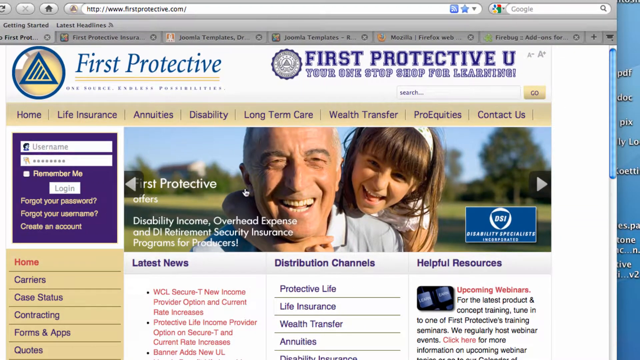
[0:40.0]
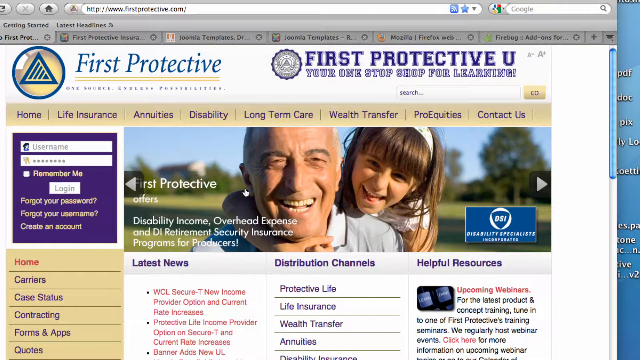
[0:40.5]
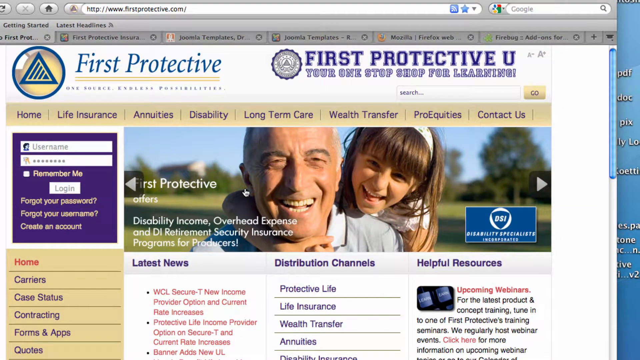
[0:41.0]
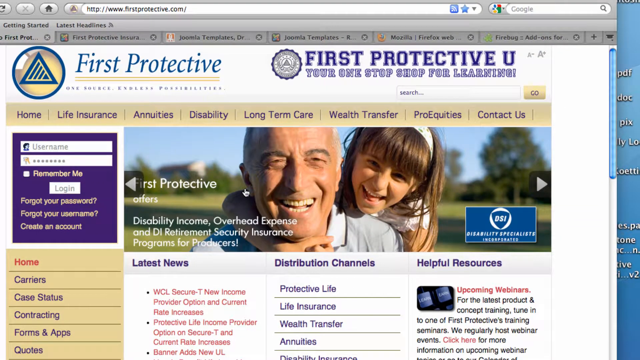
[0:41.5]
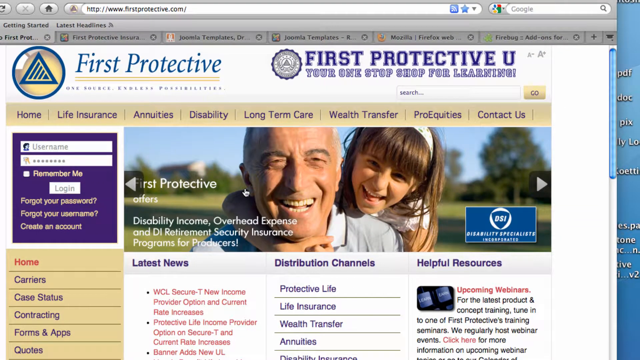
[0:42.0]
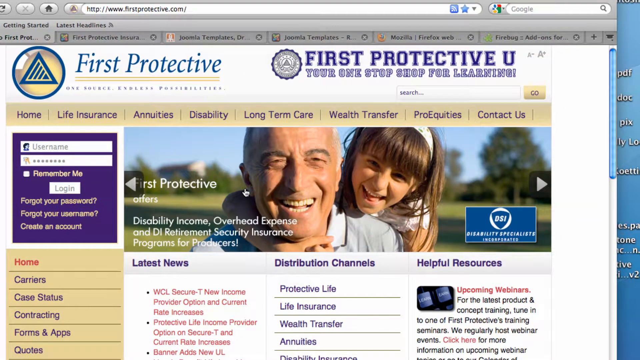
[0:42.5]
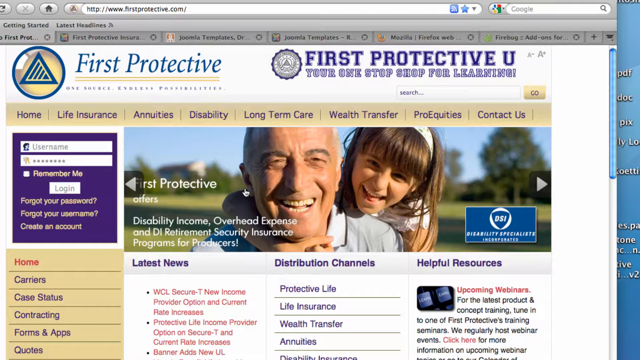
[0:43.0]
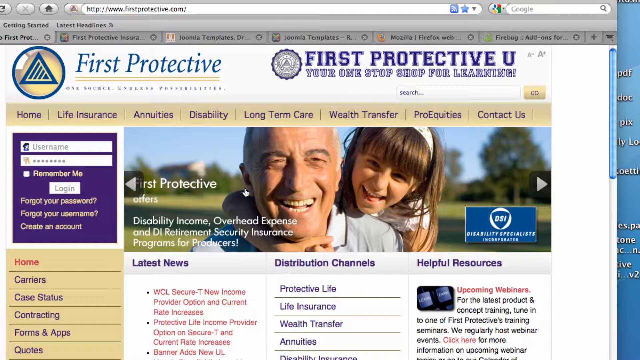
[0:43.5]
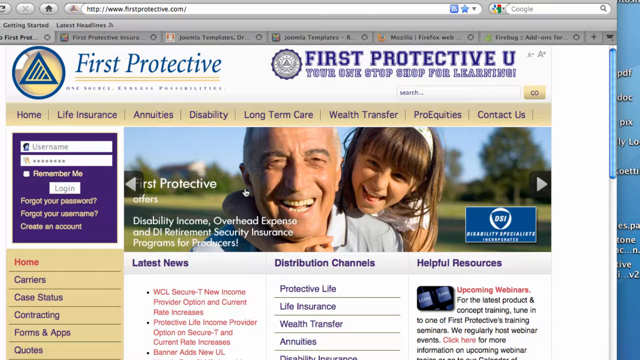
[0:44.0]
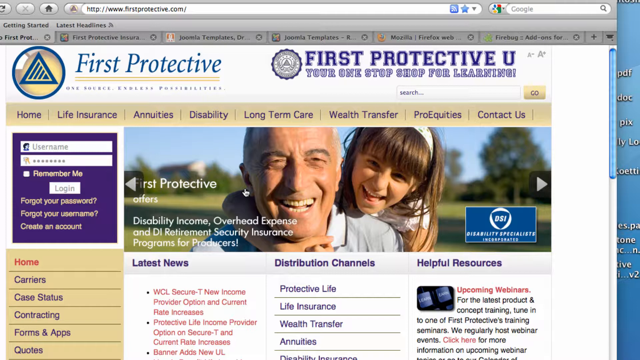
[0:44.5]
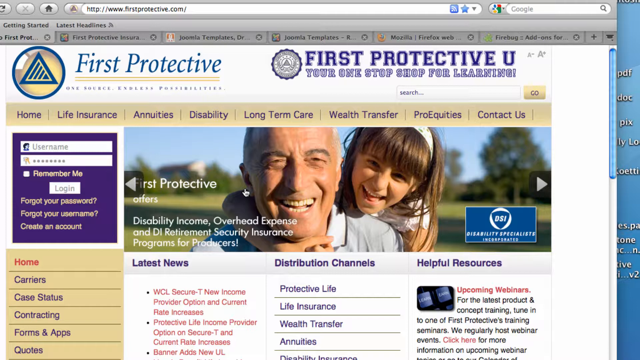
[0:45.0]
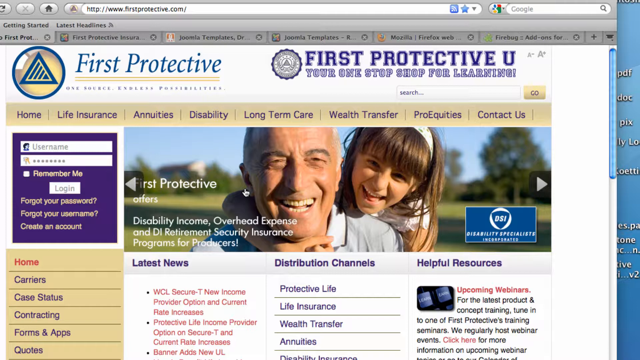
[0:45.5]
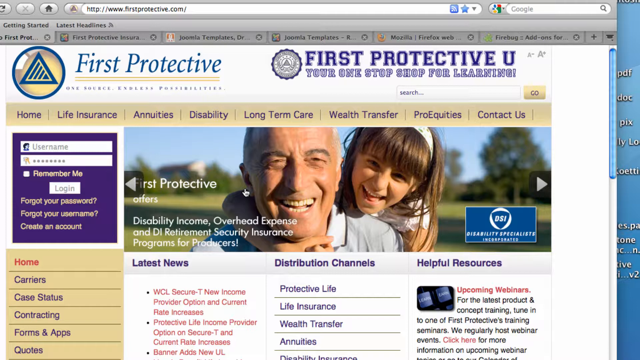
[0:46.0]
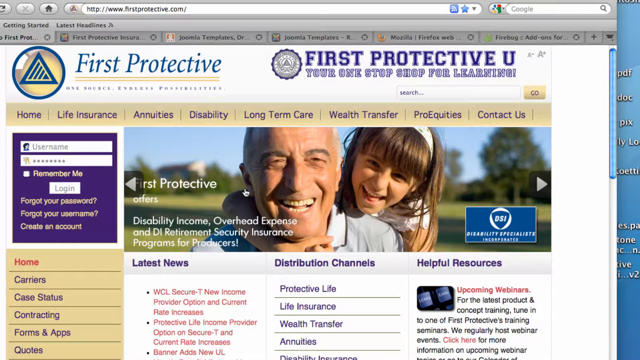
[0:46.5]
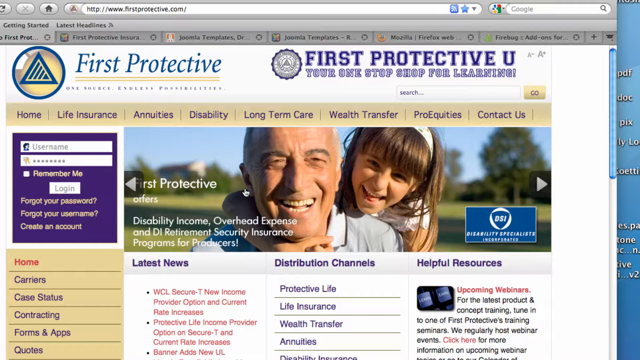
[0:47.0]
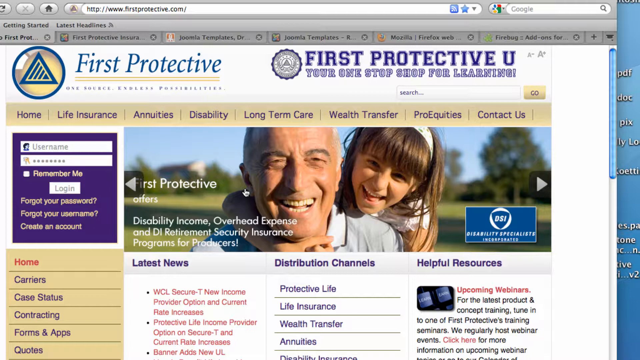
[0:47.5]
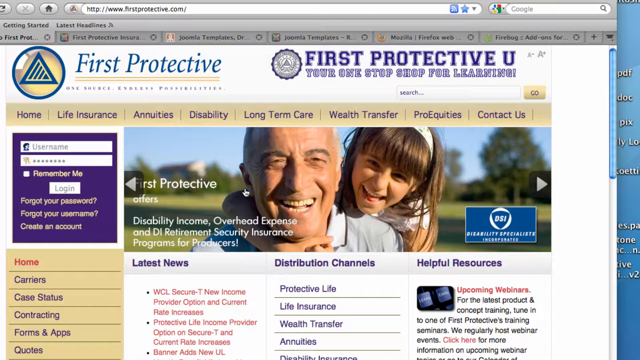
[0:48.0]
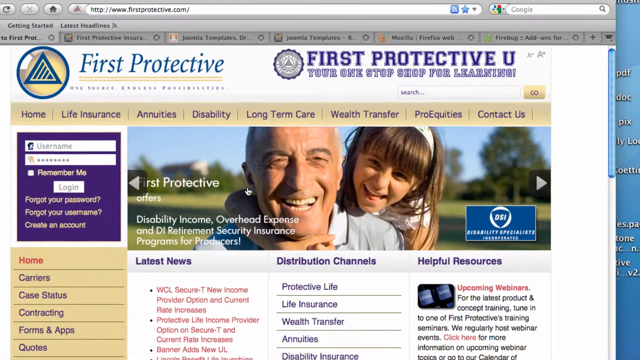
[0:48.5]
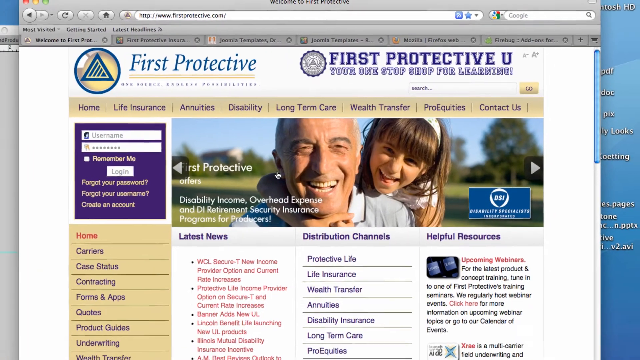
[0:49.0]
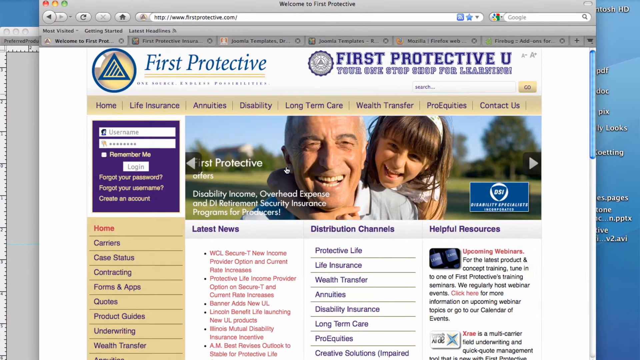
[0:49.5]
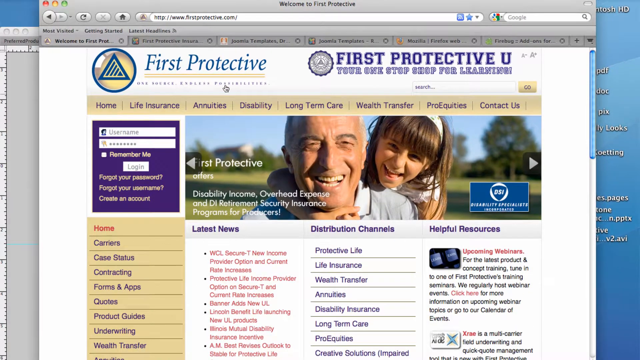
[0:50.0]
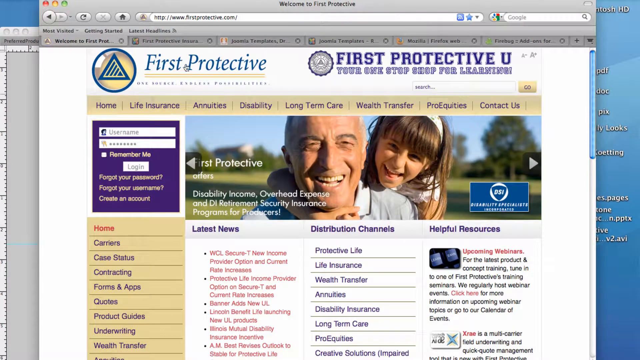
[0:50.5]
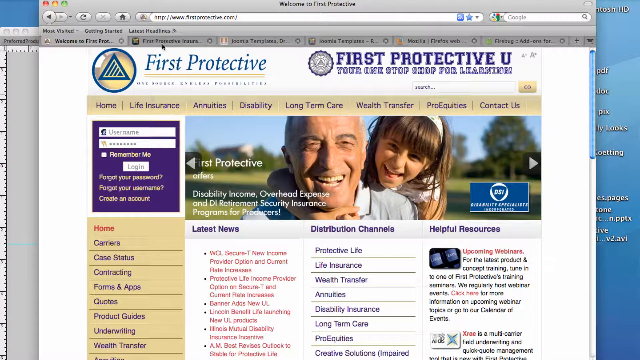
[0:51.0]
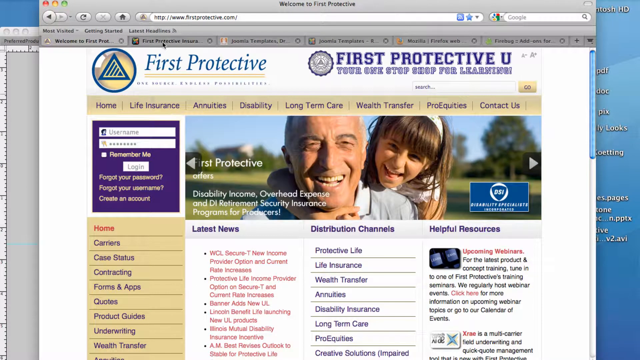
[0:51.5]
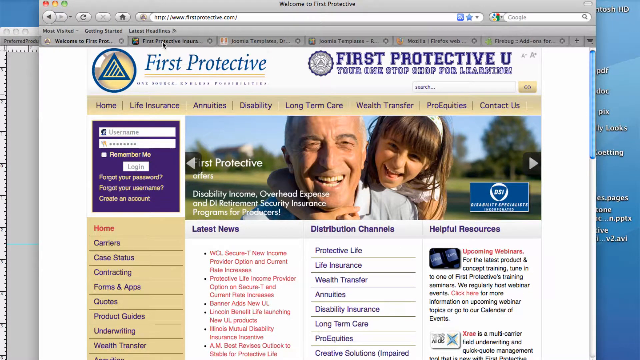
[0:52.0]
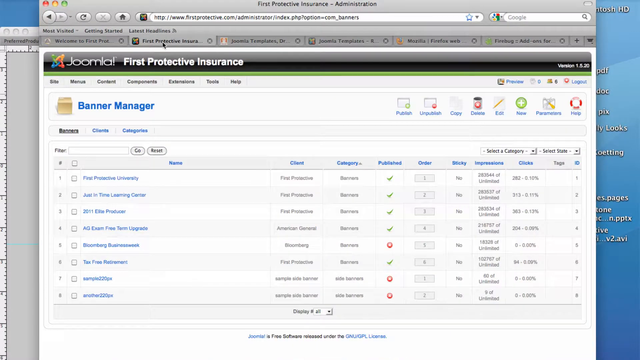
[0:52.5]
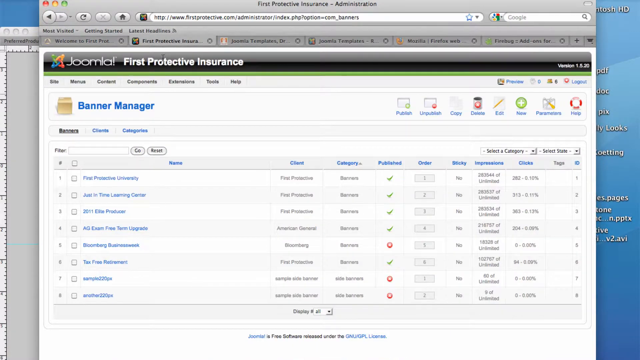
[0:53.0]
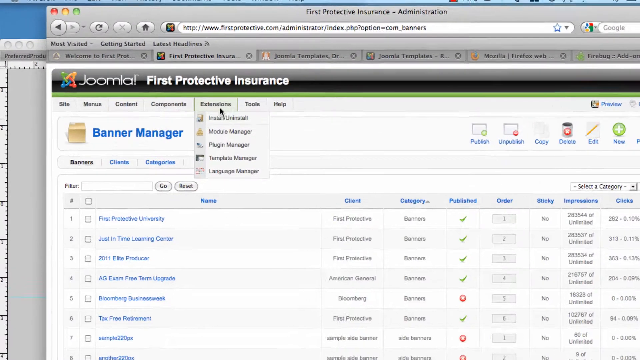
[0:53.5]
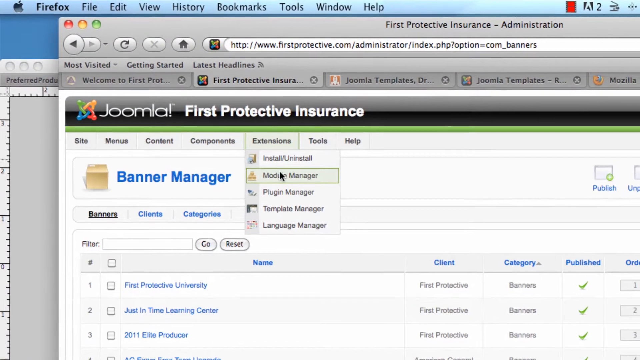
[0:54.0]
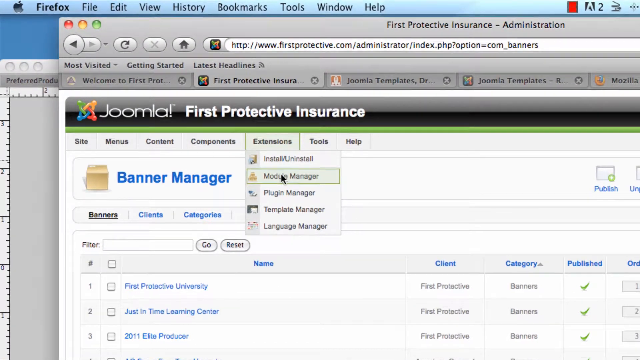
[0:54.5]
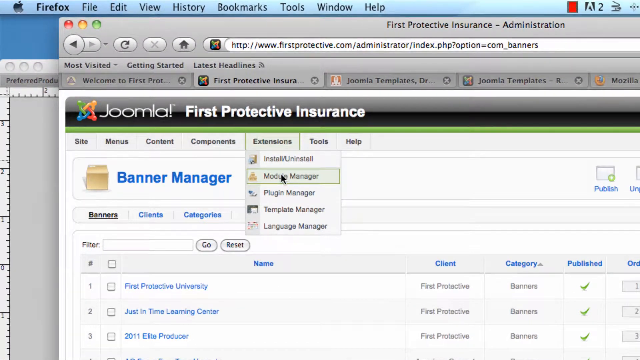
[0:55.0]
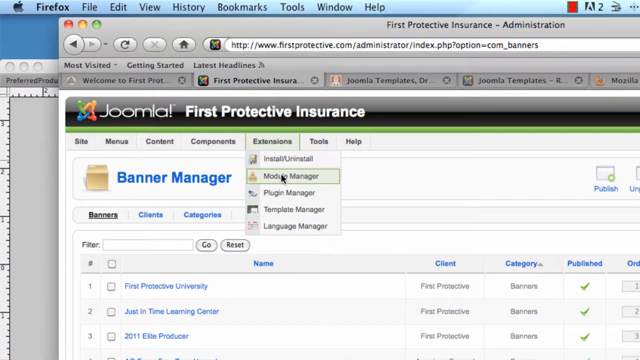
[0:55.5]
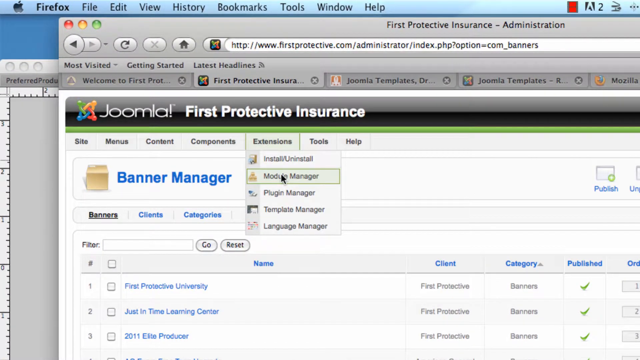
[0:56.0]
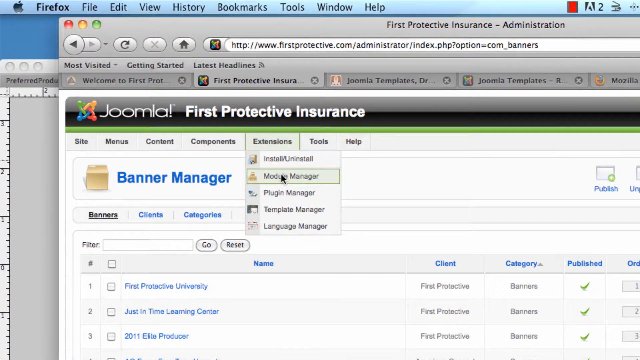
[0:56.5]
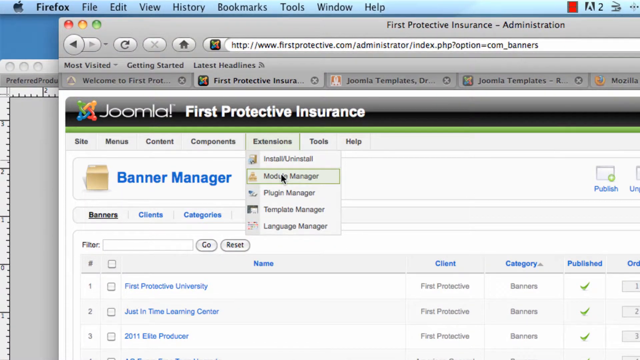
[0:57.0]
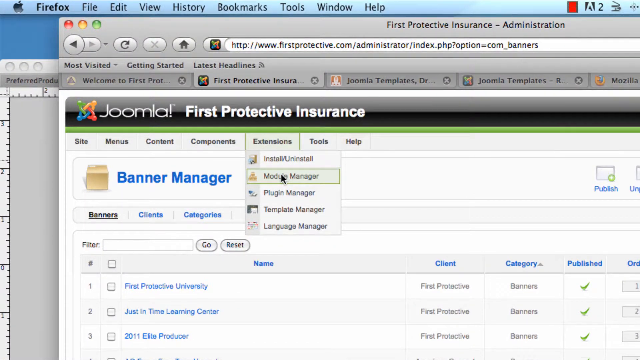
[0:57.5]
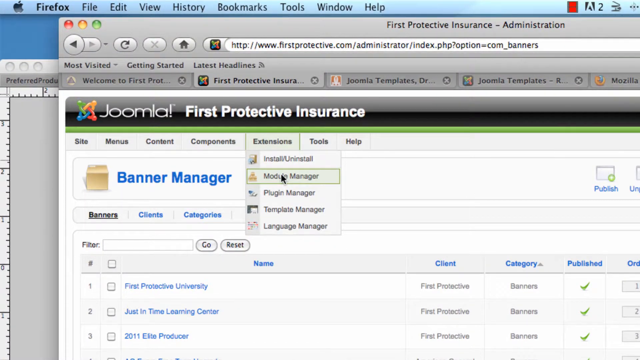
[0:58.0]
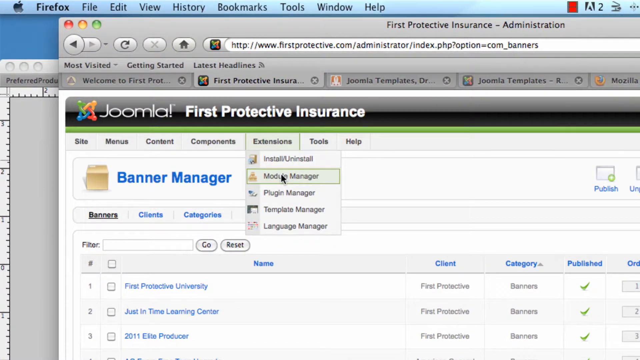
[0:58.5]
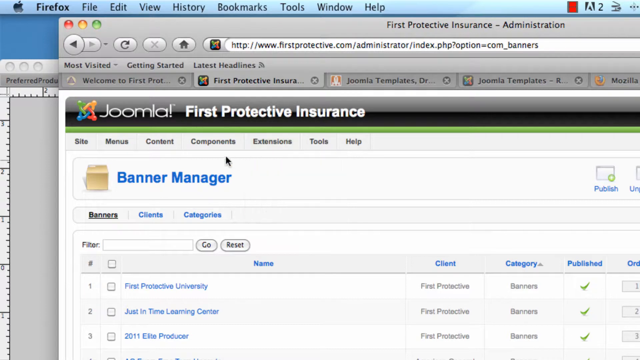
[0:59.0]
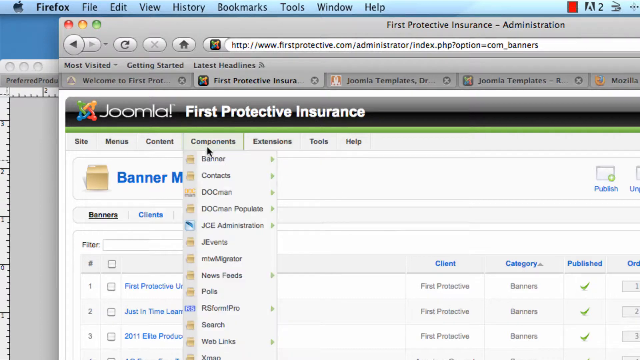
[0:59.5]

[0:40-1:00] The page scrolls back up to the top, where a picture shows an old man in his 50s with his daughter or granddaughter holding on to him from behind. Both are smiling, in a sunny golf field with trees and buildings in an out-of-focus, blurry background. At the bottom of the picture the text says "First Protective offers disability income, overhead expense, and DI retirement security insurance programs." To the right of the picture is a blue symbol that says "DSI, Disability Specialists Incorporated." The view then zooms out, and the person moves the cursor to the tabs at the top of the page and clicks a tab that says "Extensions." He then moves the mouse to the bottom and highlights something that says "Model Manager."